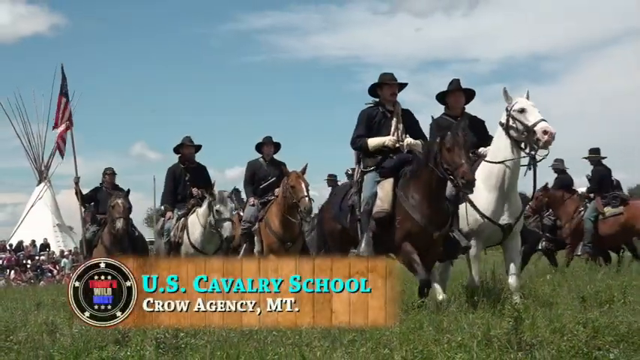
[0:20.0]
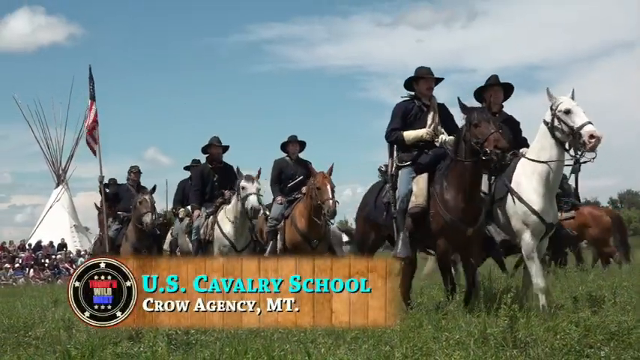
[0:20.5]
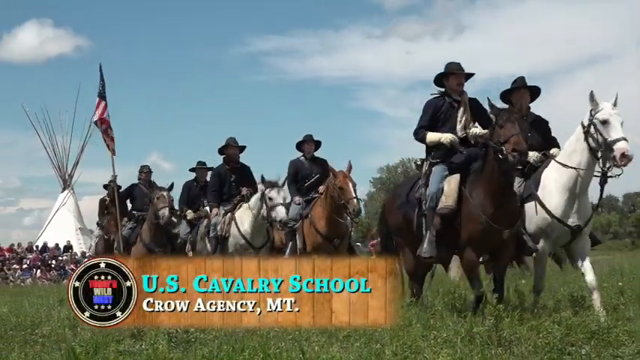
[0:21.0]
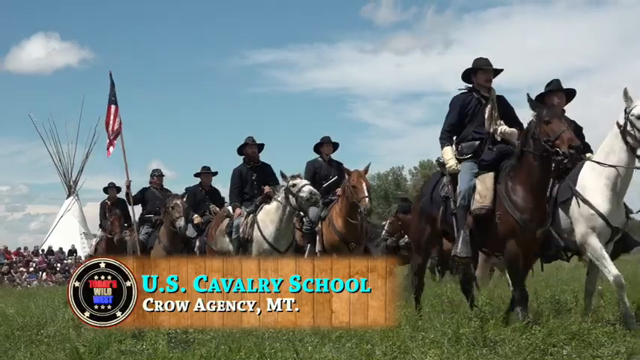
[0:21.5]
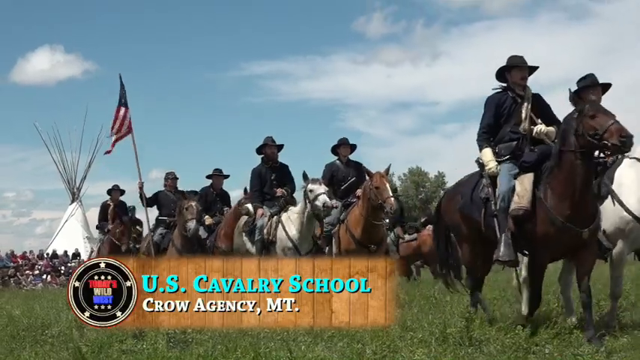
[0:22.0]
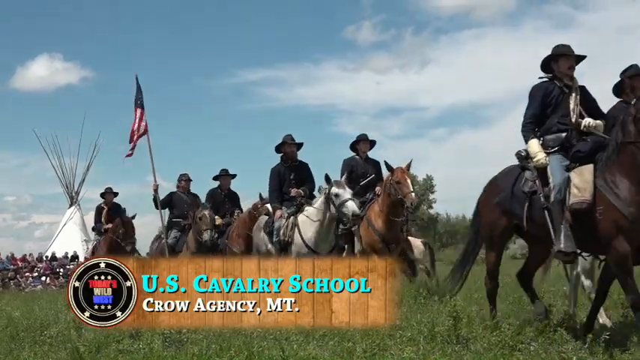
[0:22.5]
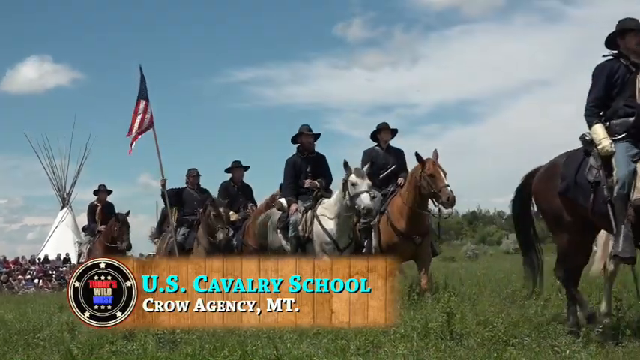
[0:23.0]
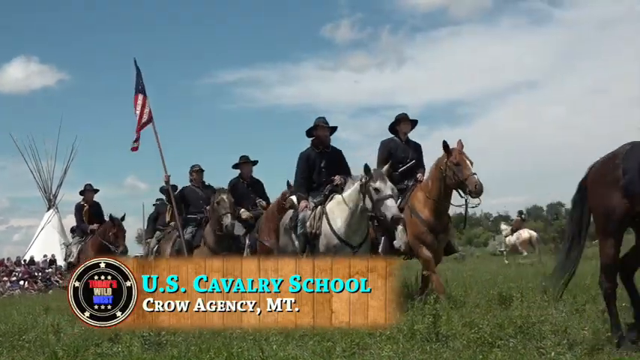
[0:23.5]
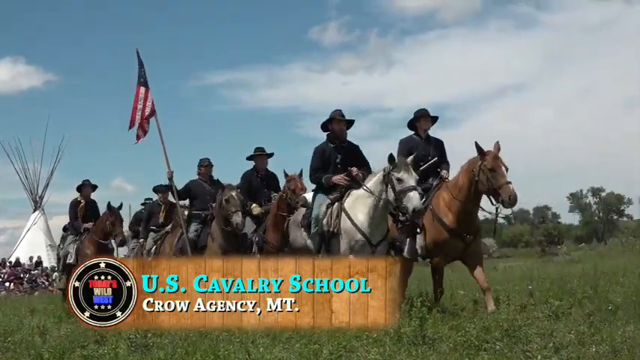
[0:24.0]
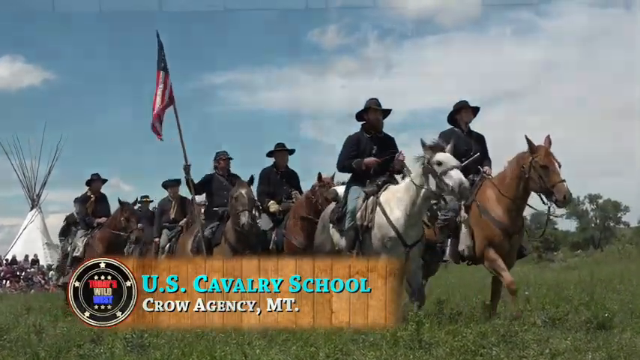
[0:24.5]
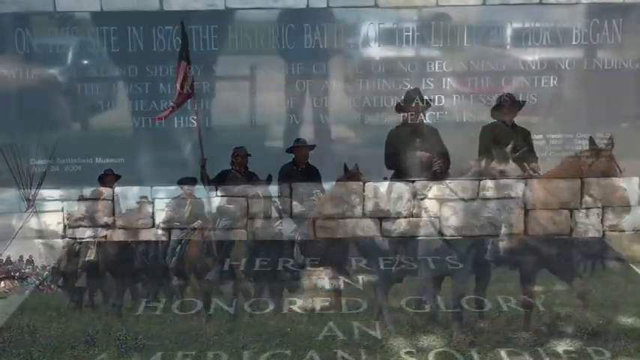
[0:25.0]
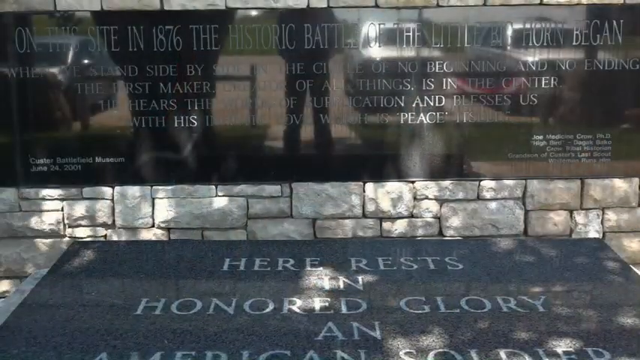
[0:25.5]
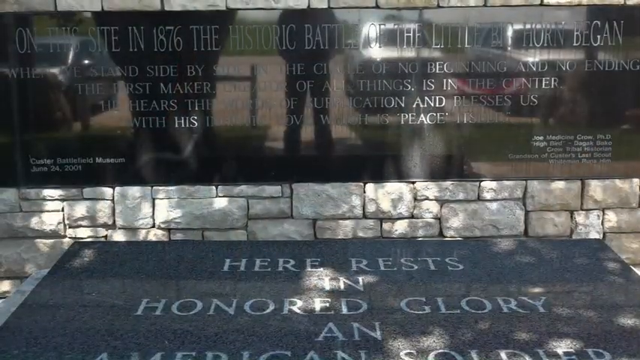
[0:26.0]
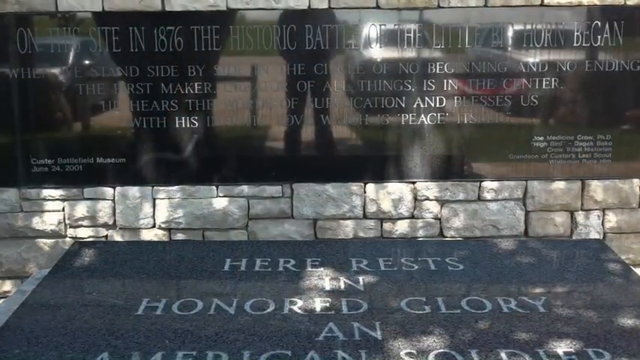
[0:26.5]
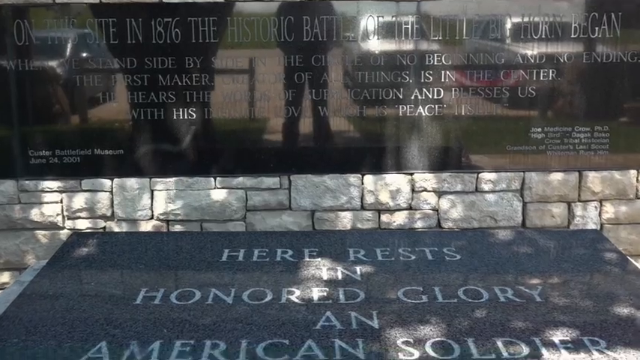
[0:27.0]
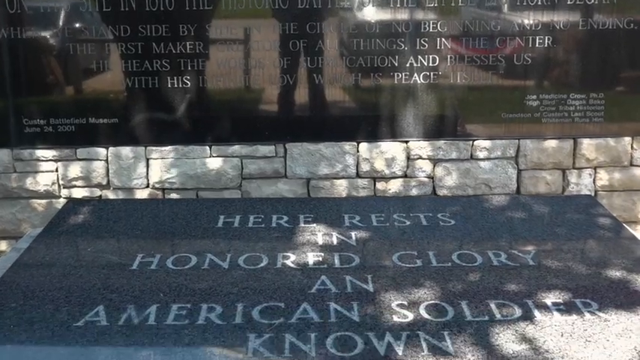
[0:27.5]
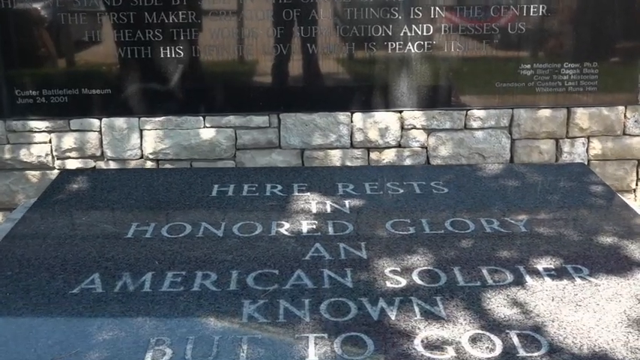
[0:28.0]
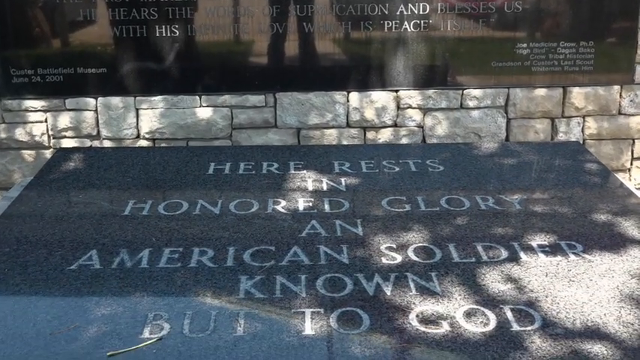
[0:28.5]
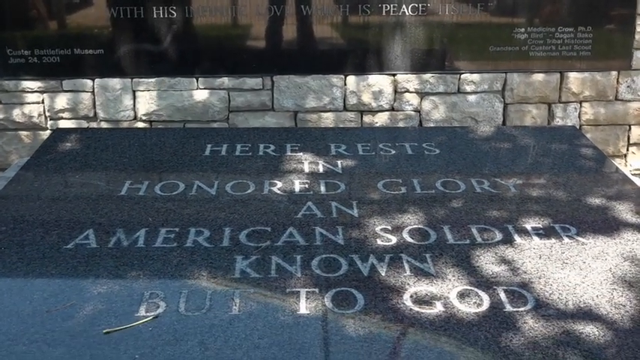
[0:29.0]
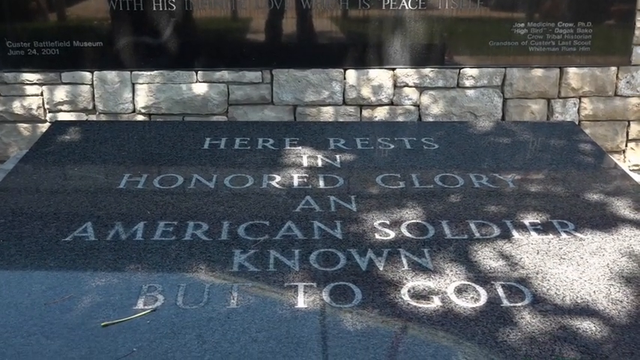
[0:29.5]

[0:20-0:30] A group of men ride horses colored white, dark brown and light brown. The men are dressed in cowboy gear with jeans, cowboy boots, cowboy hats and jackets, and one of them holds up the American flag. Next is what looks to be a memorial, where one of the monuments reads "here rests in honored glory an American soldier known but to God". The scene is on a bright, sunny day.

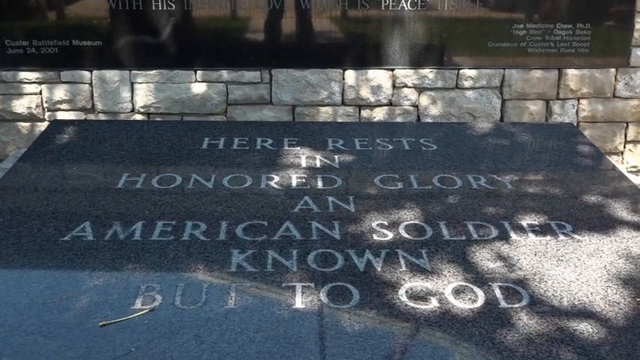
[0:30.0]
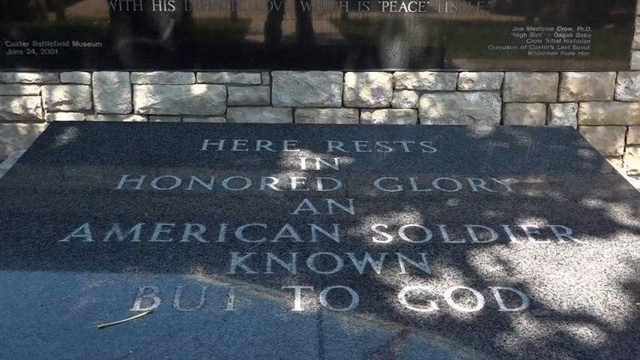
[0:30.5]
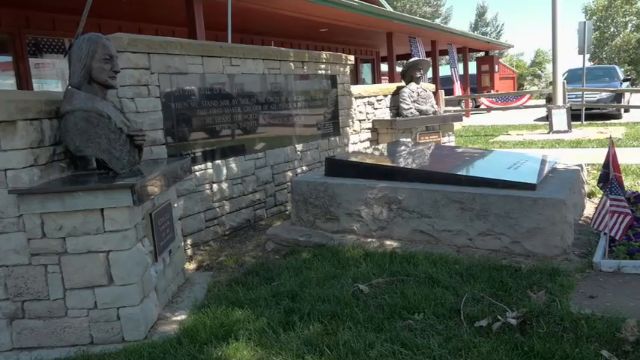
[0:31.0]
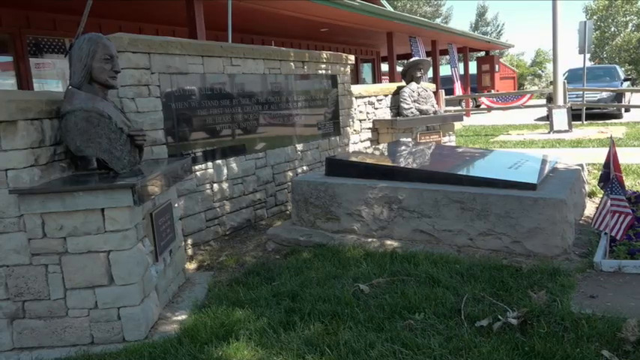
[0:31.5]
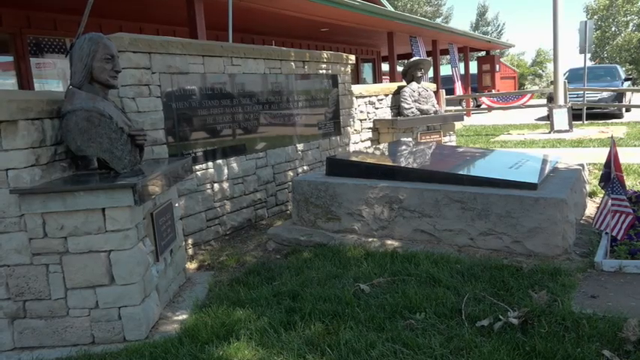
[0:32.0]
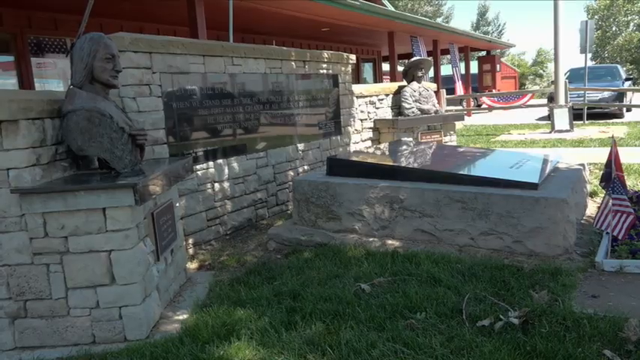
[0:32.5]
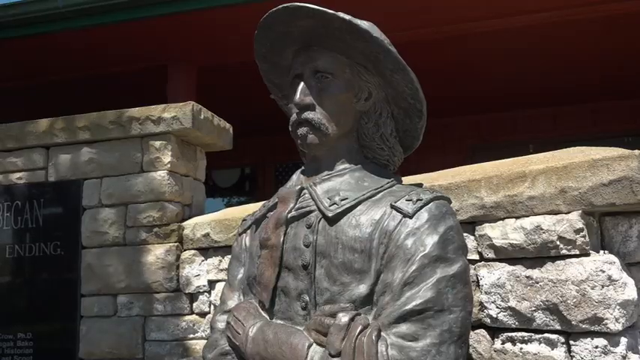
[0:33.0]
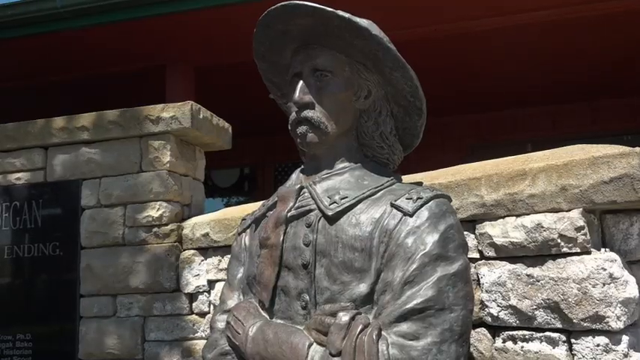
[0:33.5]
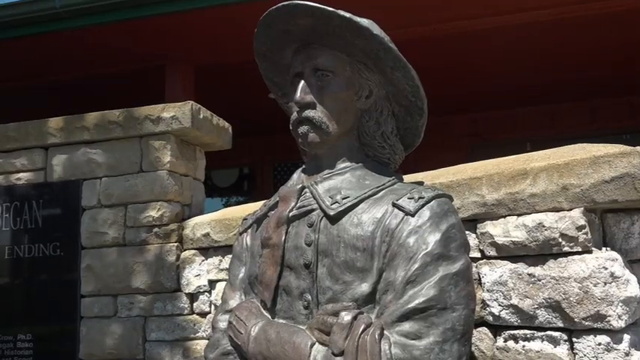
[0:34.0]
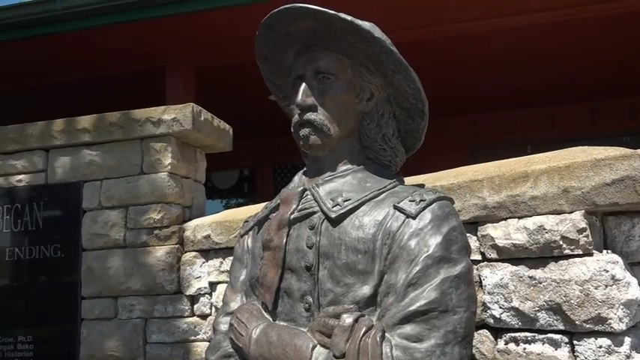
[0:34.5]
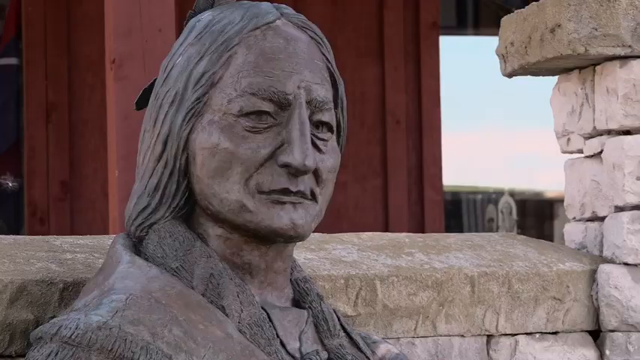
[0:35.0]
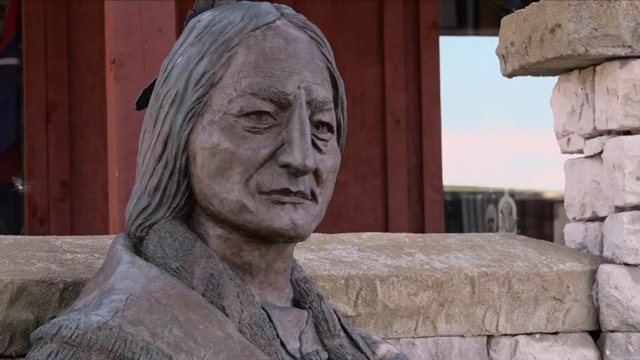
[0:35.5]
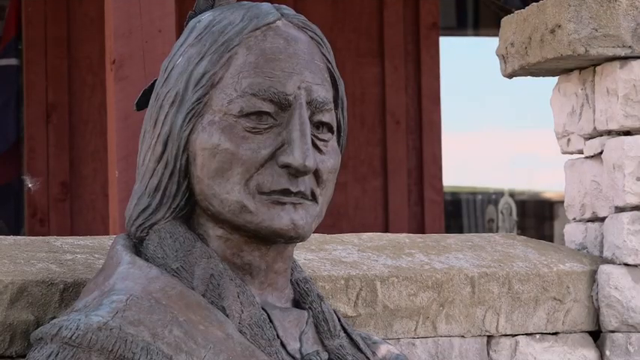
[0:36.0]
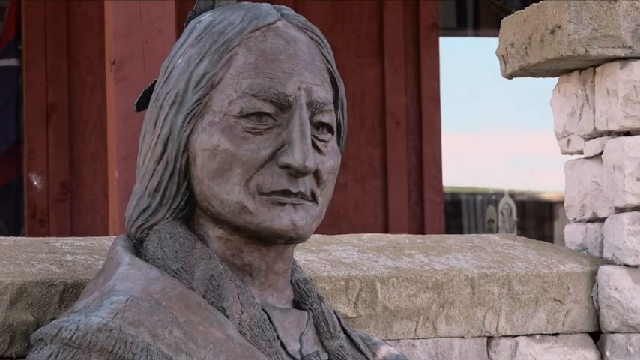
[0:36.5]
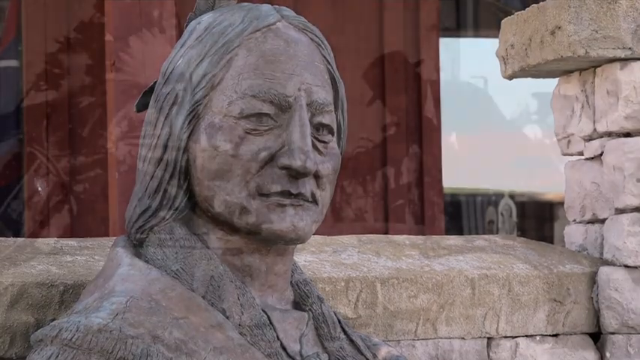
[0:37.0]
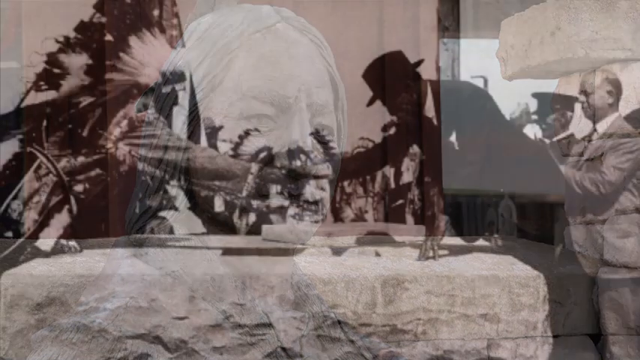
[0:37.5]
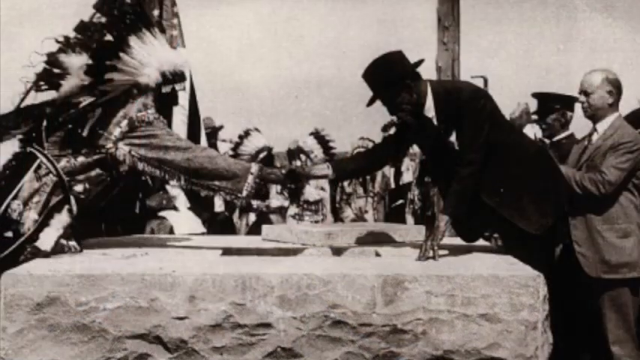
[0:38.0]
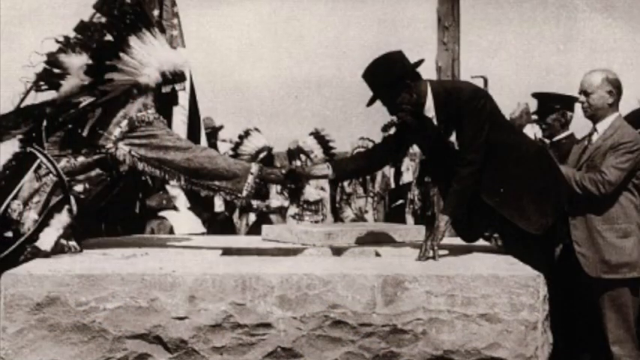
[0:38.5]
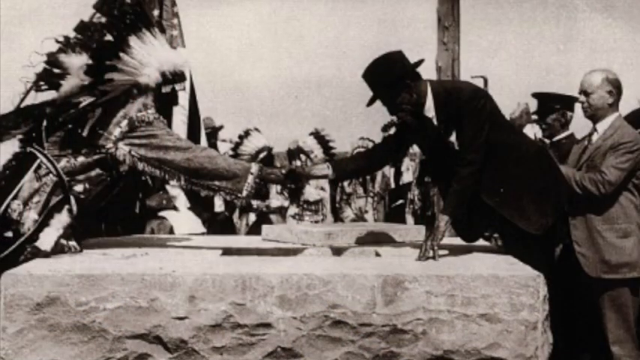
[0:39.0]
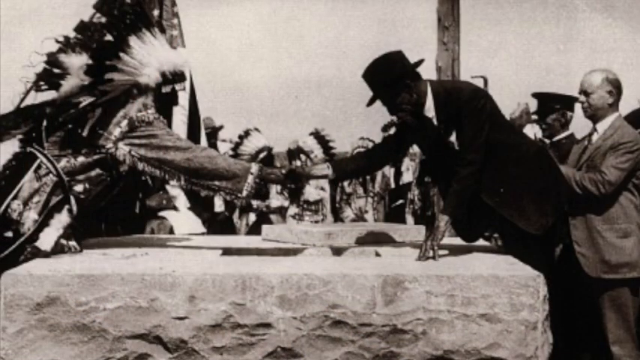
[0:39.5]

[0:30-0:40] More of the memorial monuments appear, with an American flag displayed and a vehicle parked on the side. A statue shows a man with long hair wearing cowboy gear, including a cowboy jacket and a cowboy hat. A different statue monument shows a man who looks to be of Native American descent. Then a black and white picture shows a man dressed in Native American attire shaking hands with a person in a suit and tie alongside a table, while other men around them look on.